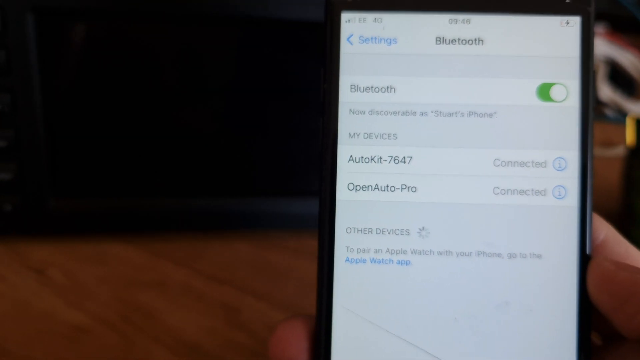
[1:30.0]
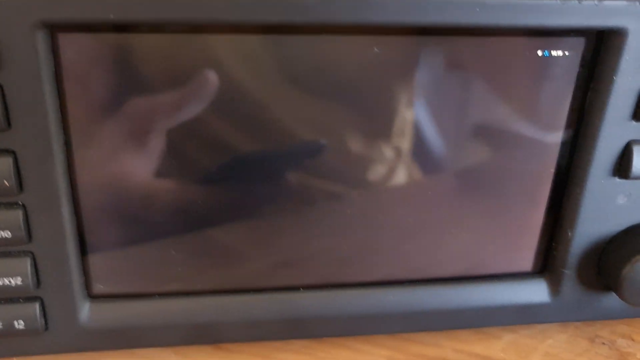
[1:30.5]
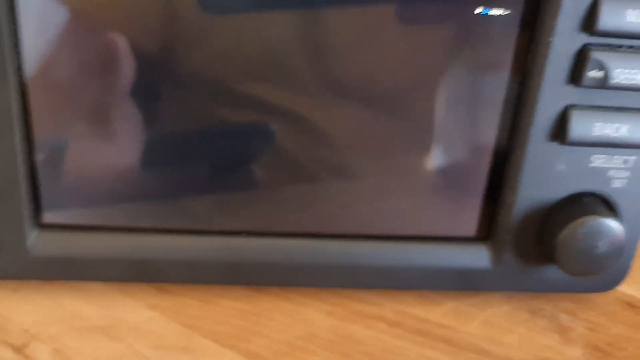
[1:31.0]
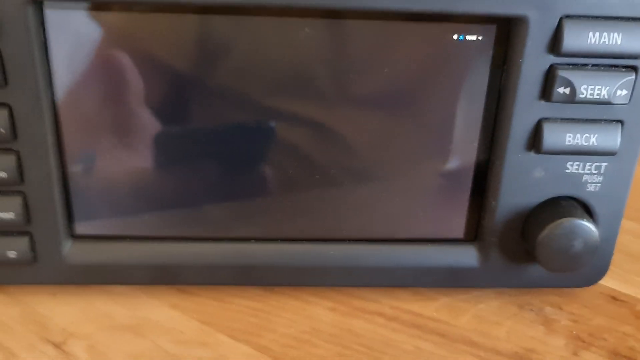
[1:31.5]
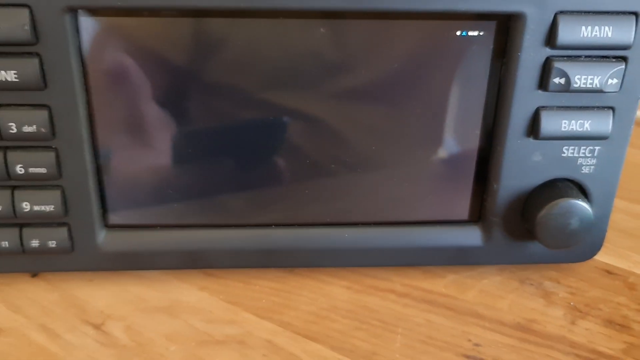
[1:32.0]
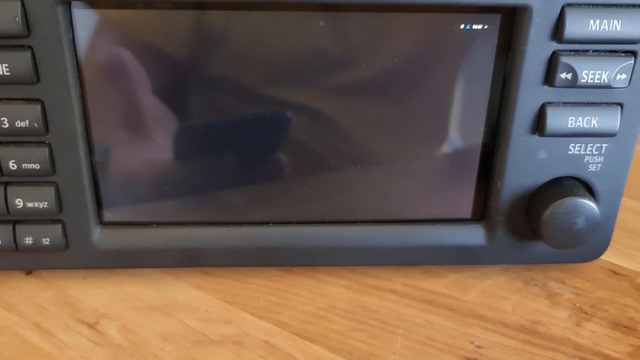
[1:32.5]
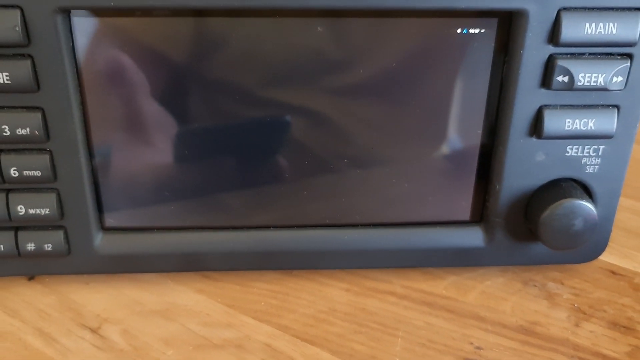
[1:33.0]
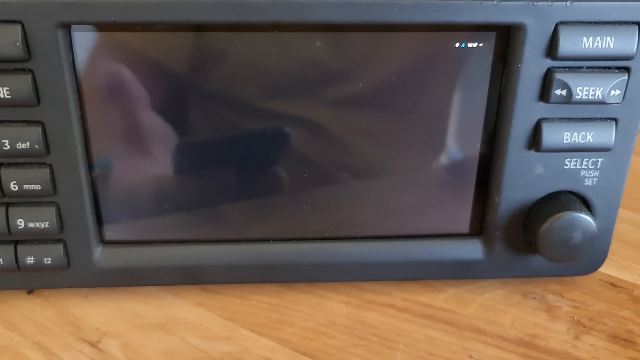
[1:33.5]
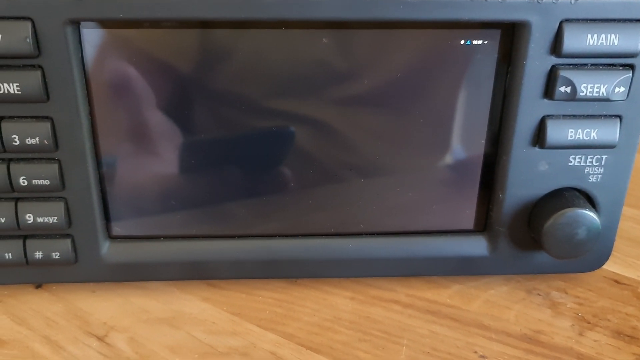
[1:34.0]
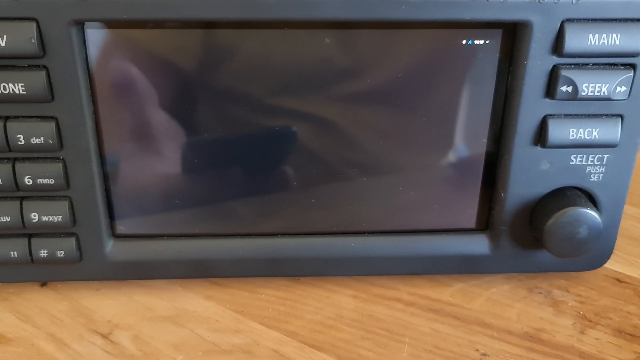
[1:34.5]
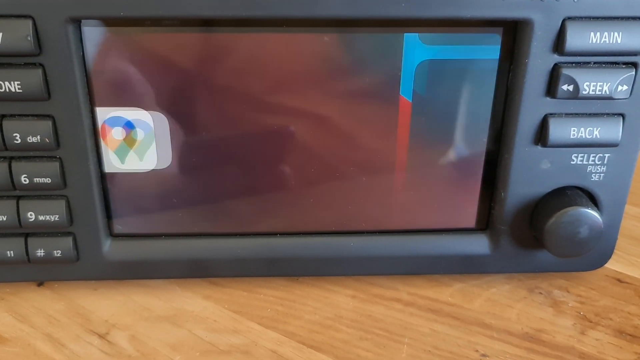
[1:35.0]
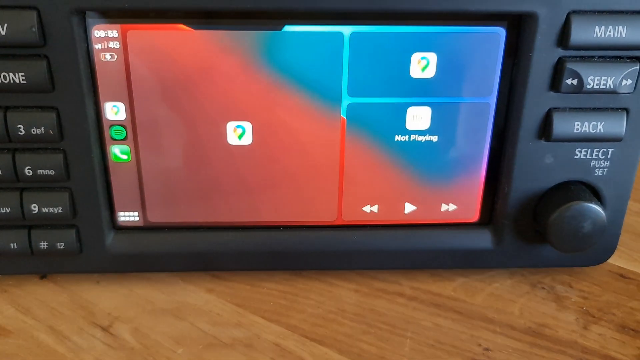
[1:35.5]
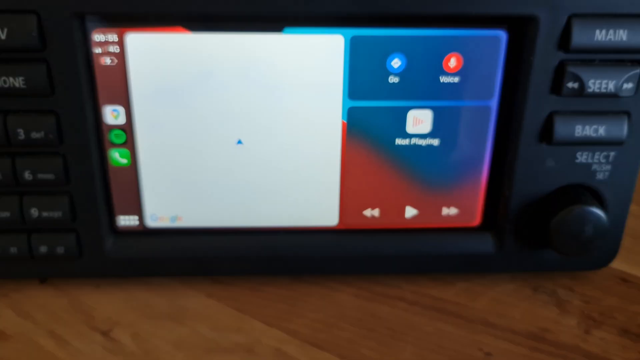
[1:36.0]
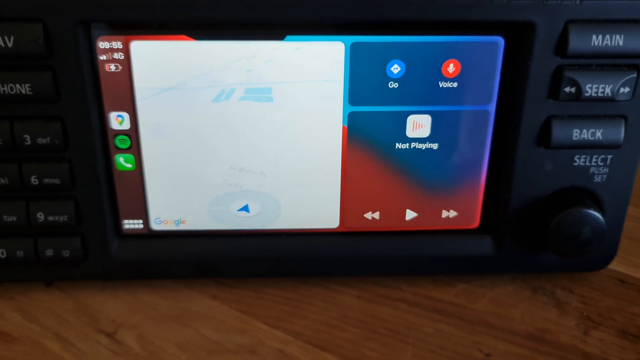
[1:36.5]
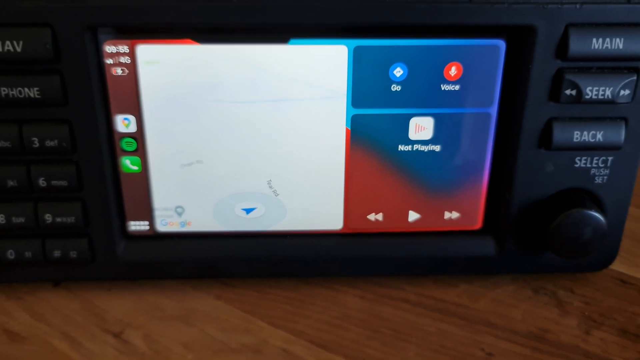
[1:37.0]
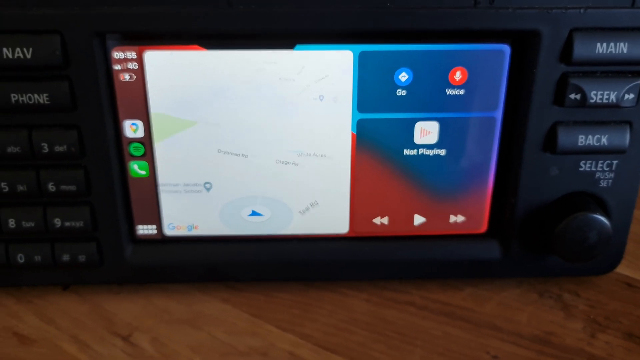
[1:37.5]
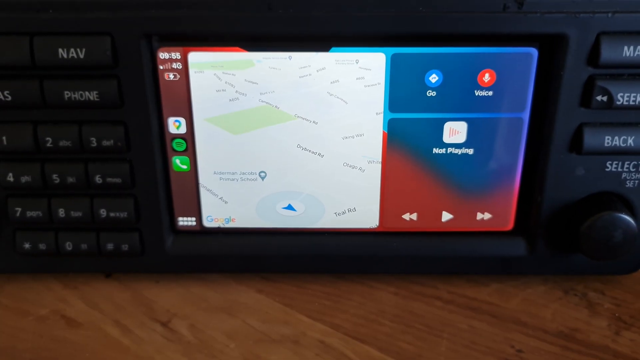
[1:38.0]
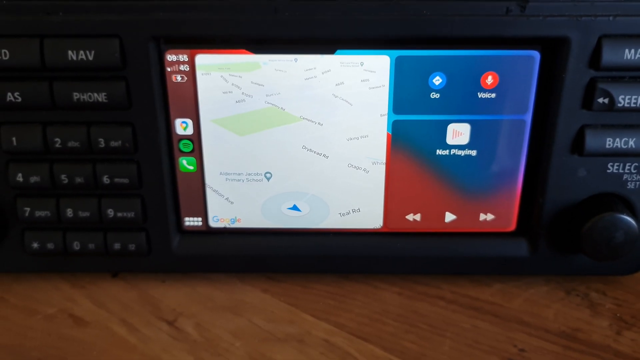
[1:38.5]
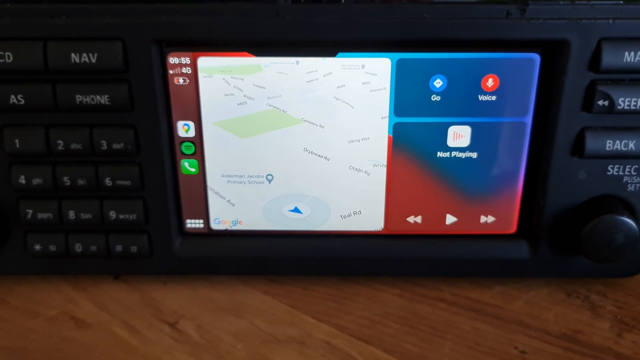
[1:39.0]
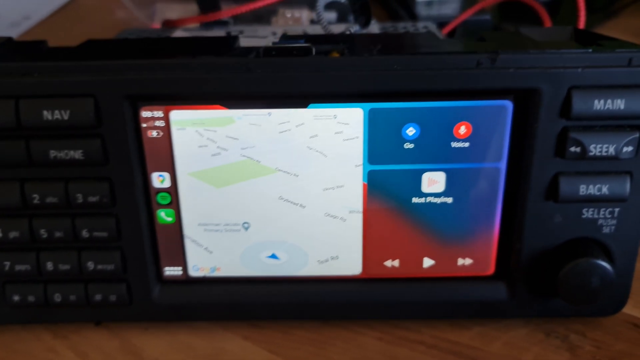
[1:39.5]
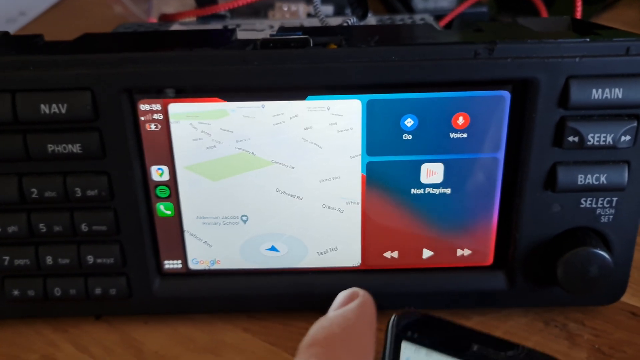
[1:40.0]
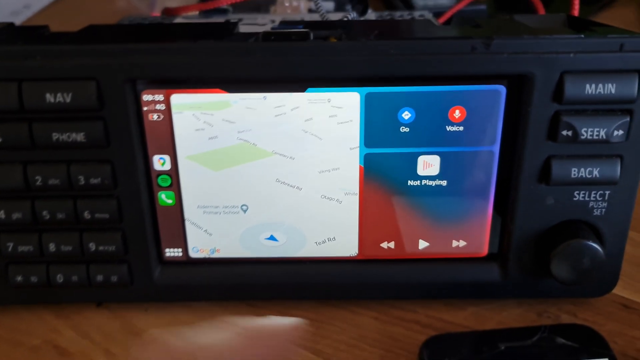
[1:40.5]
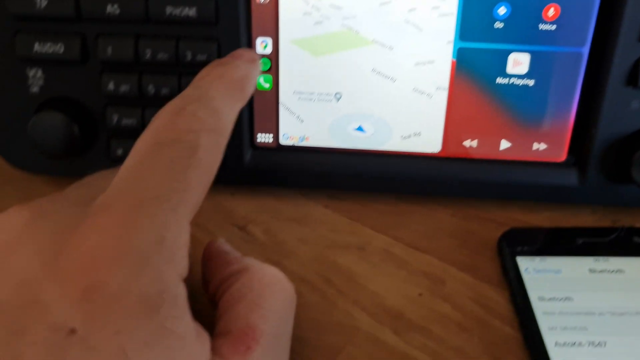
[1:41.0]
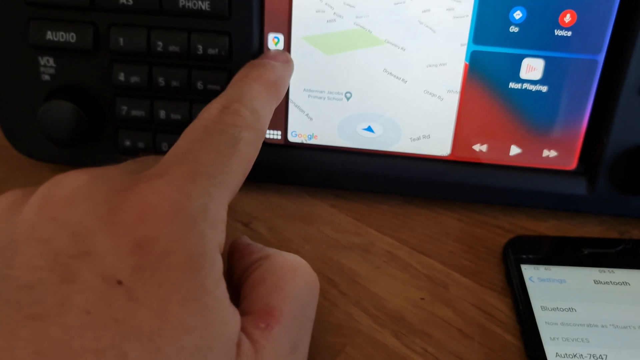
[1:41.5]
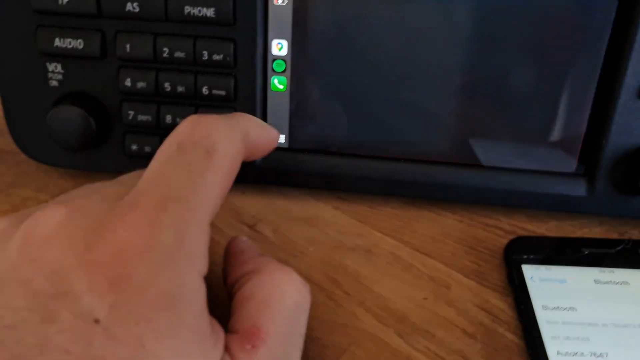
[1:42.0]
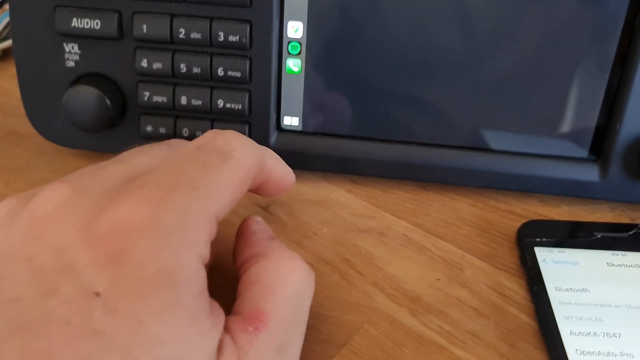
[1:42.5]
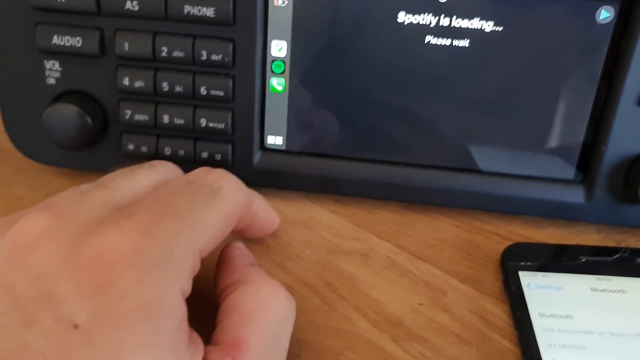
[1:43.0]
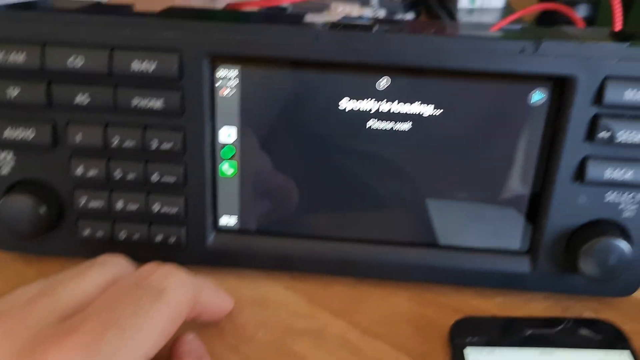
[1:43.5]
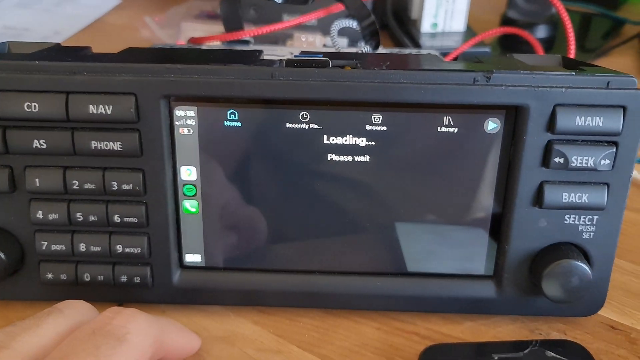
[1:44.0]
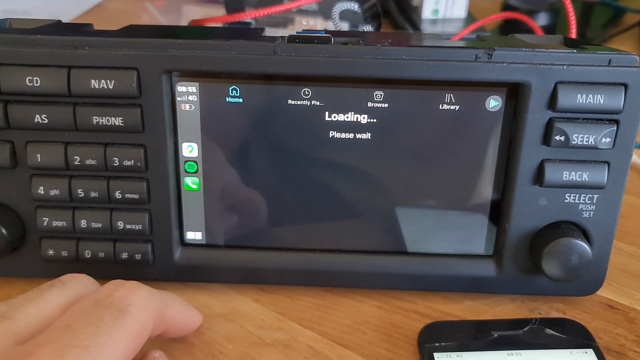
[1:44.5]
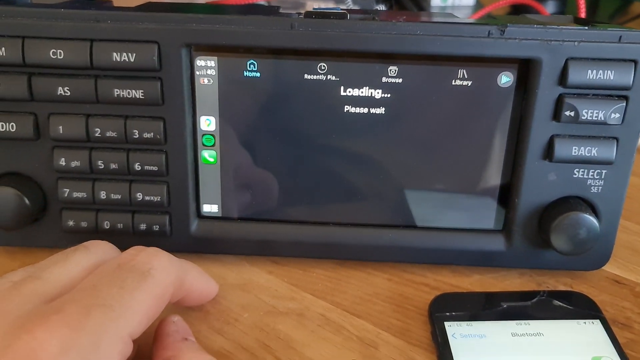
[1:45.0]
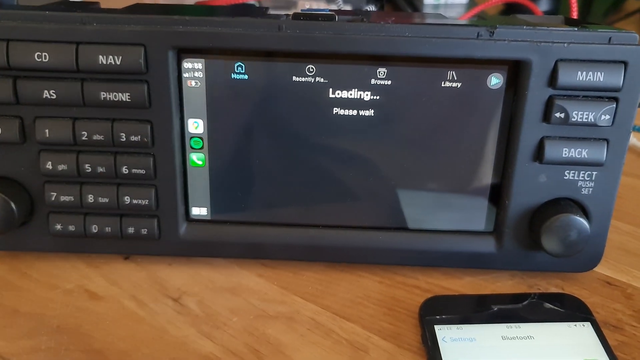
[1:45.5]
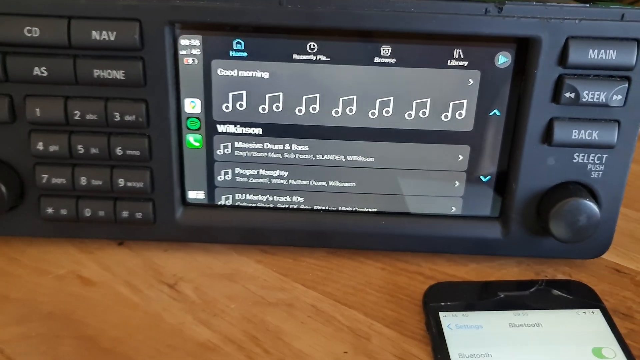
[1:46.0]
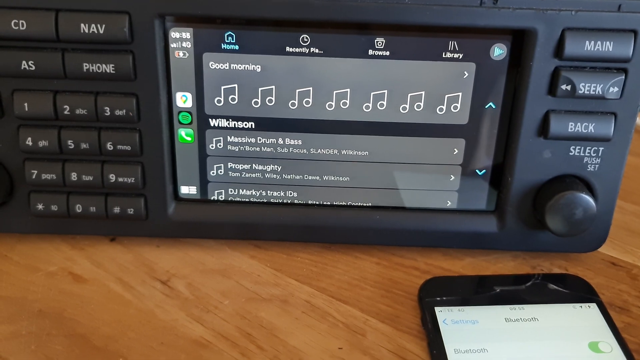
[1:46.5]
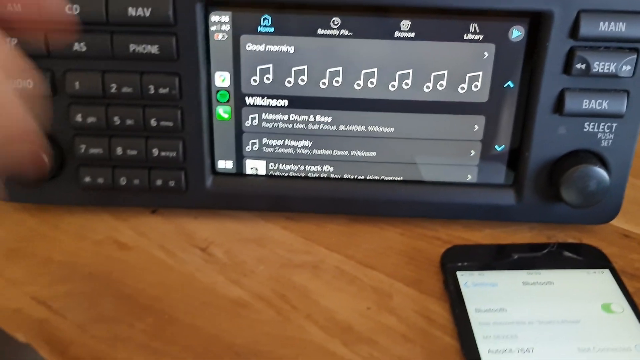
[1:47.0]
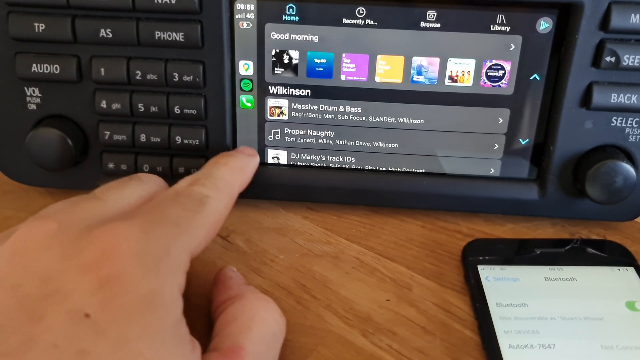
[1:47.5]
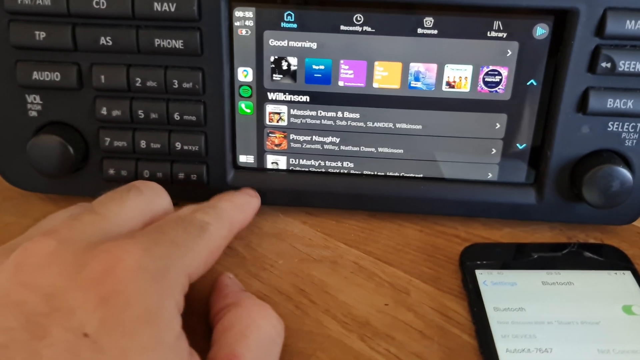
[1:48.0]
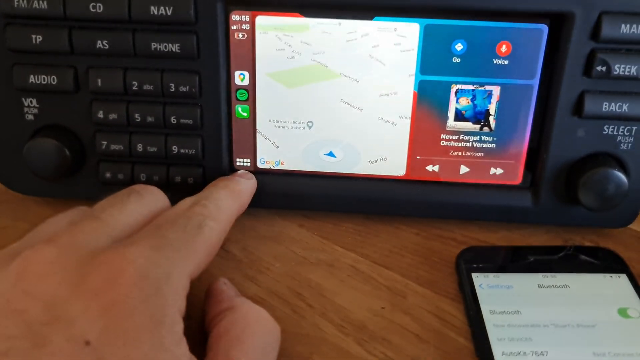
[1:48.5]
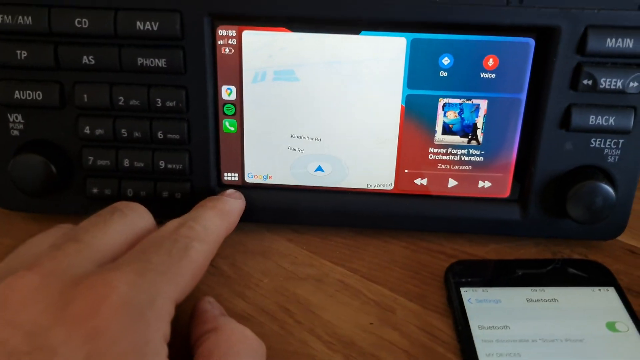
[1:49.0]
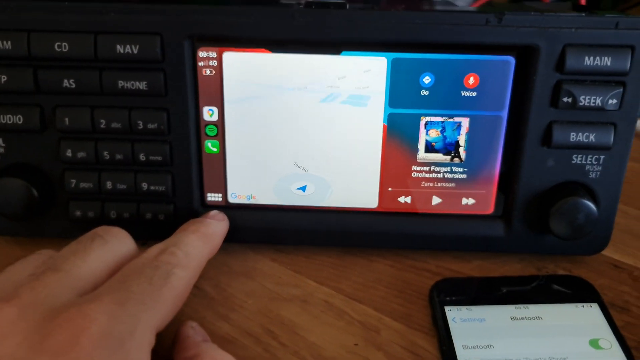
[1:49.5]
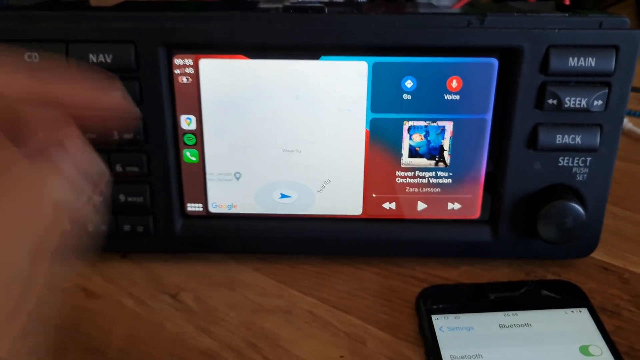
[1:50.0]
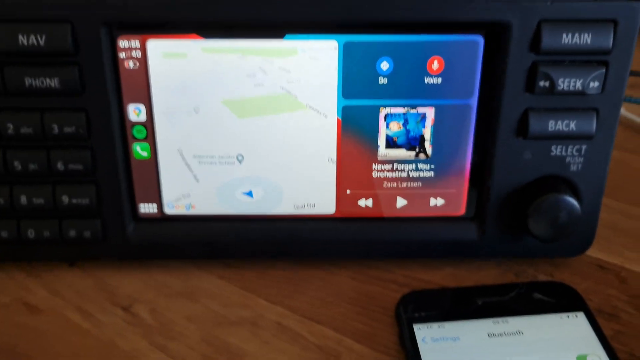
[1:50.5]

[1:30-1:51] The car radio screen turns blank, and then what appears to be CarPlay appears, an iPhone-like screen. At first a map and a few other things are shown. The person then starts up Spotify to play some music. There is an option to use voice and an option to start navigation, along with familiar iPhone icons: the call icon, the Spotify icon and the Google Maps icon. There are control buttons for Spotify and album art for the song just being started. It looks like the iPhone is now connected to the car radio through CarPlay, with the phone's apps showing up on and controlled from the car radio's screen.